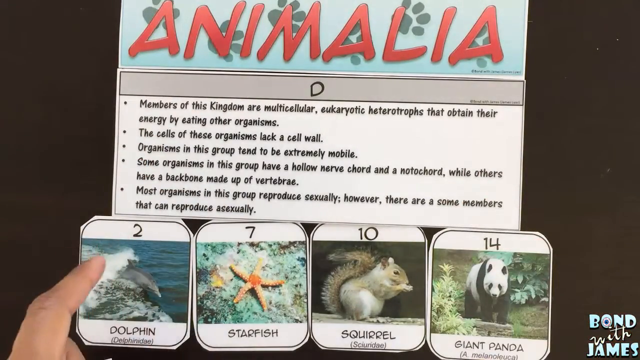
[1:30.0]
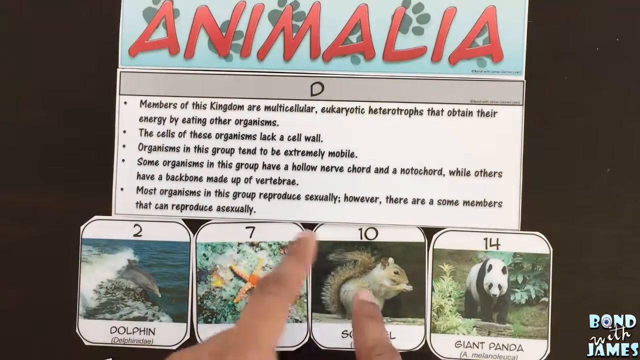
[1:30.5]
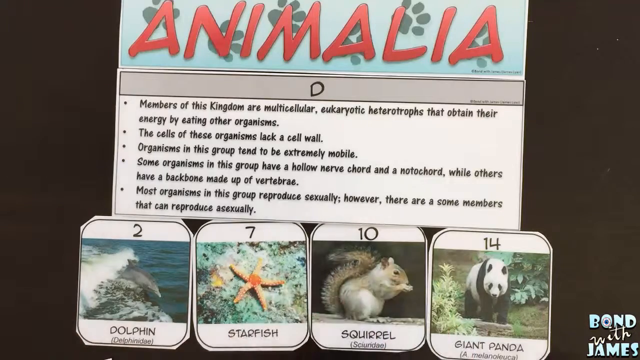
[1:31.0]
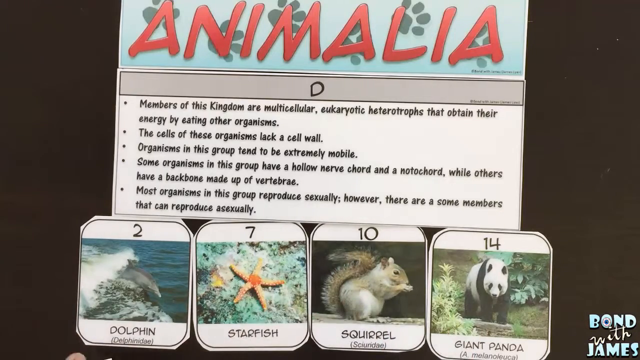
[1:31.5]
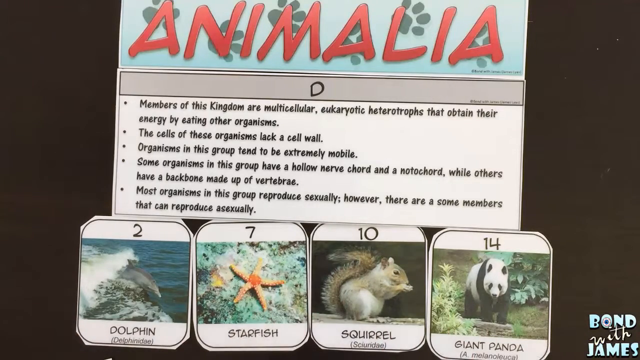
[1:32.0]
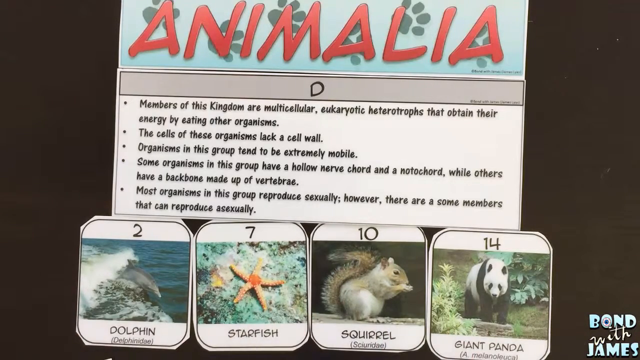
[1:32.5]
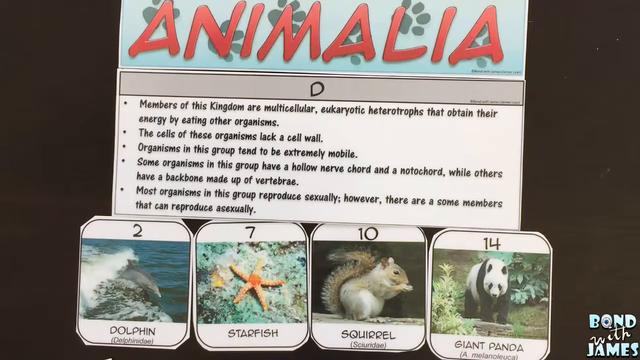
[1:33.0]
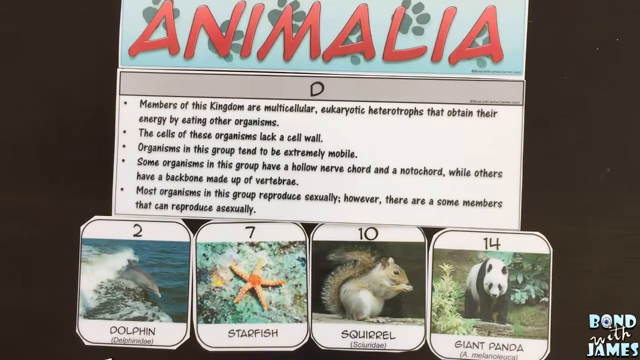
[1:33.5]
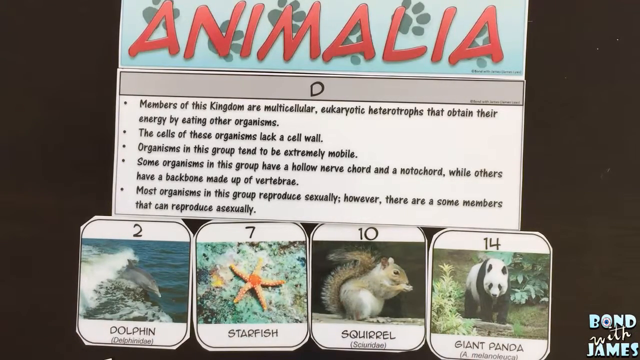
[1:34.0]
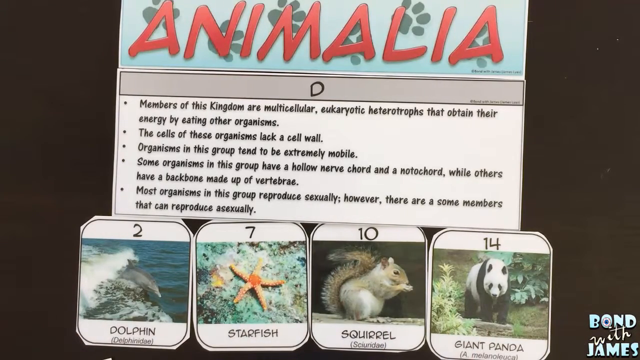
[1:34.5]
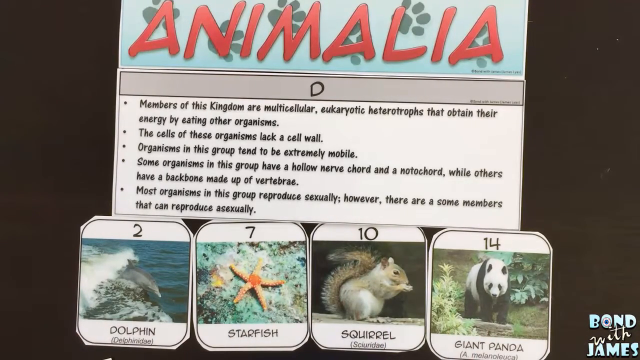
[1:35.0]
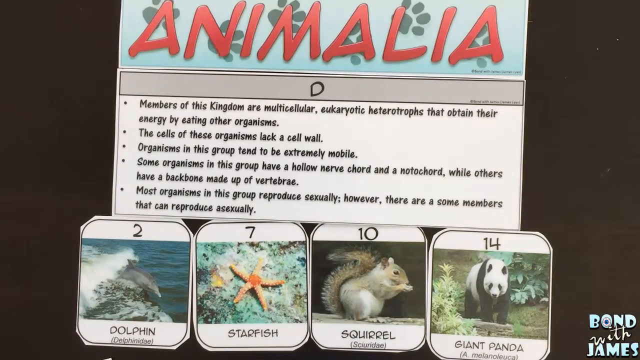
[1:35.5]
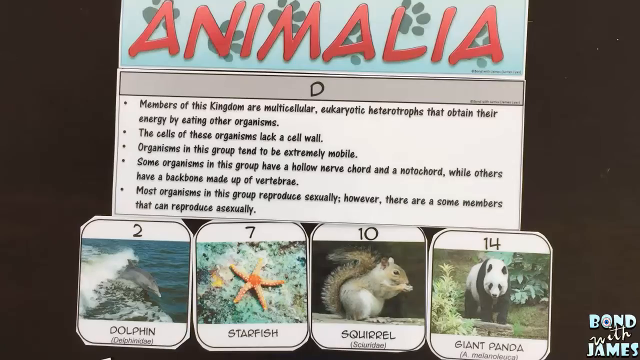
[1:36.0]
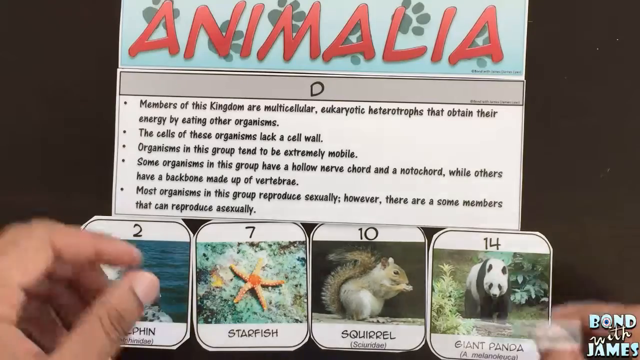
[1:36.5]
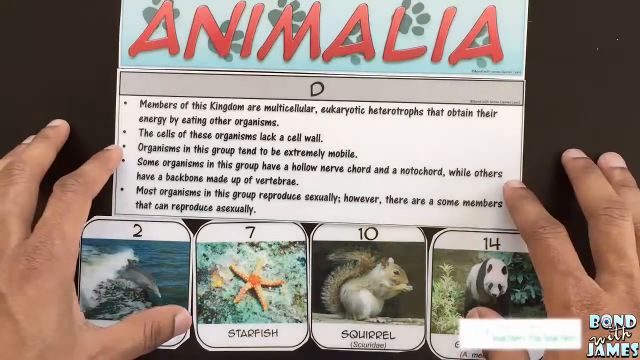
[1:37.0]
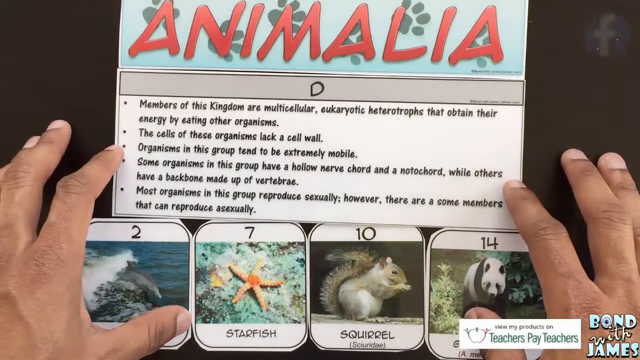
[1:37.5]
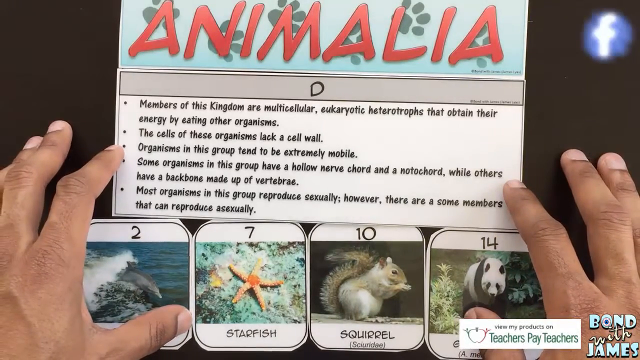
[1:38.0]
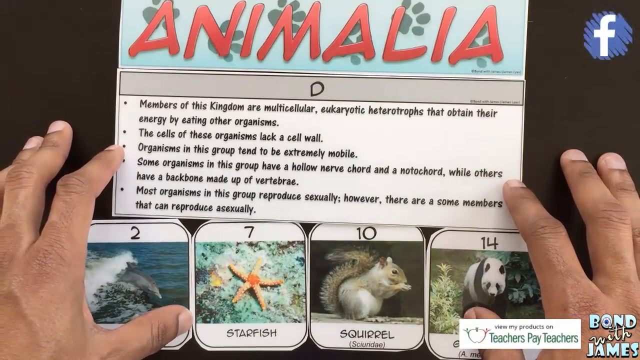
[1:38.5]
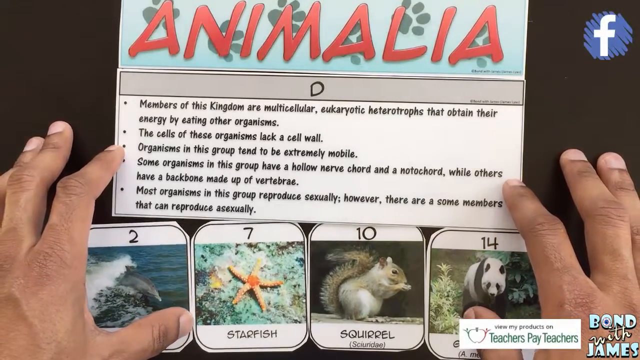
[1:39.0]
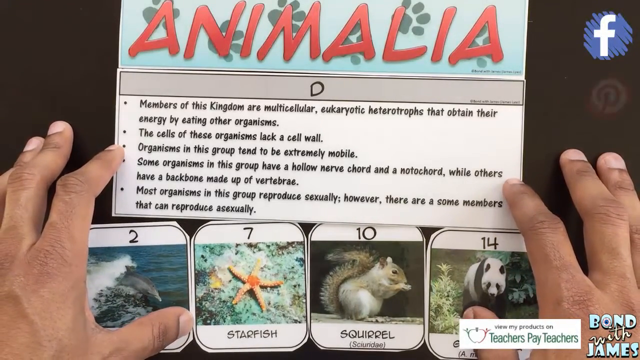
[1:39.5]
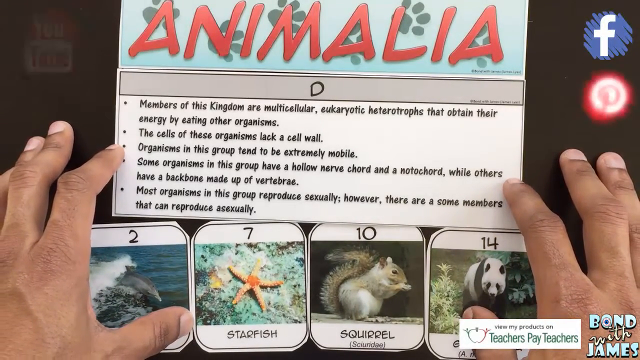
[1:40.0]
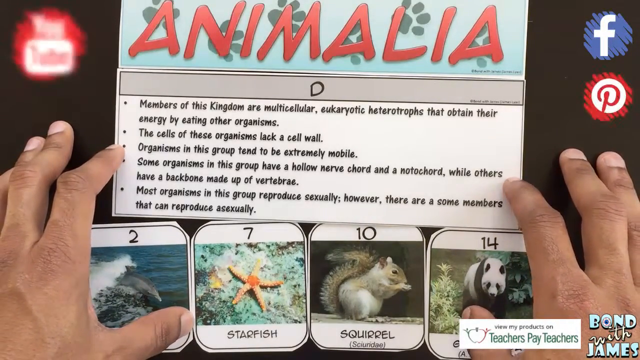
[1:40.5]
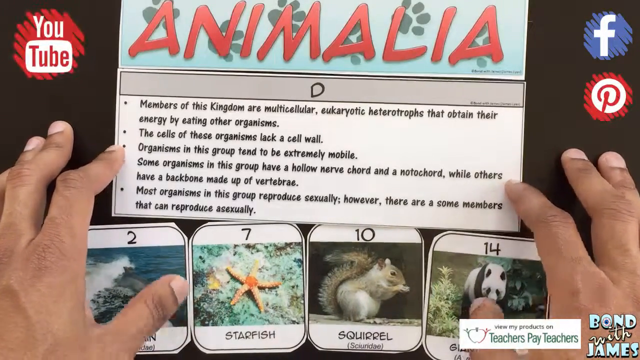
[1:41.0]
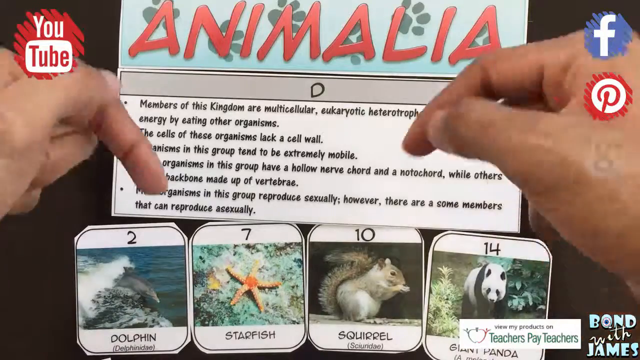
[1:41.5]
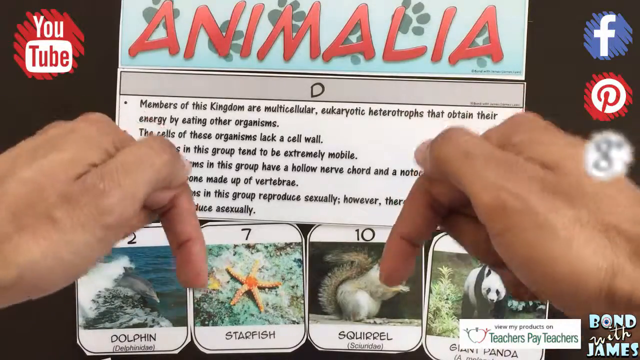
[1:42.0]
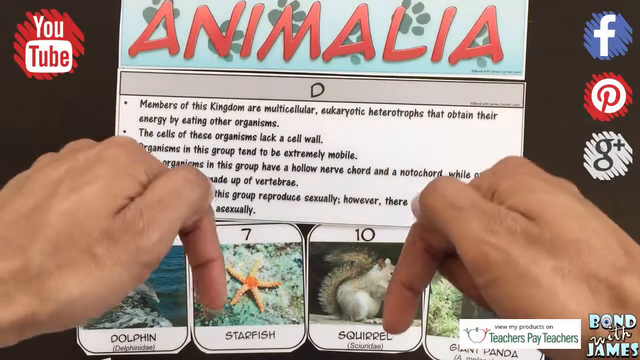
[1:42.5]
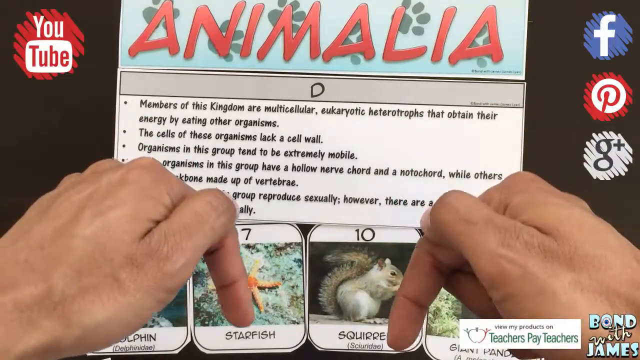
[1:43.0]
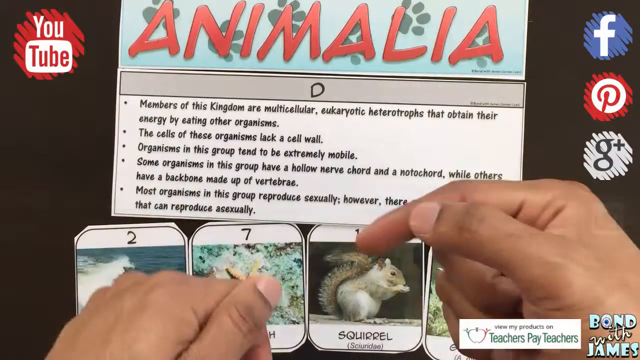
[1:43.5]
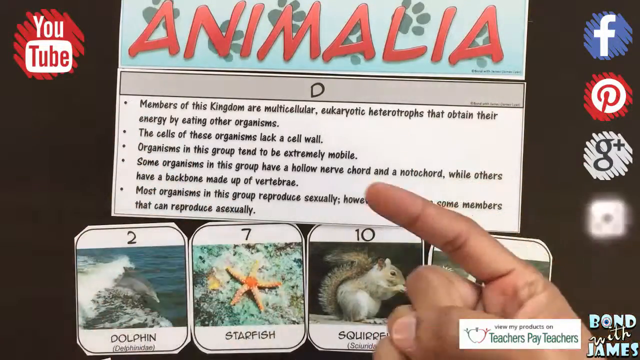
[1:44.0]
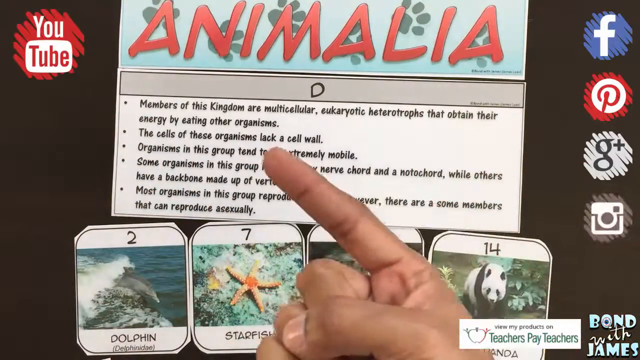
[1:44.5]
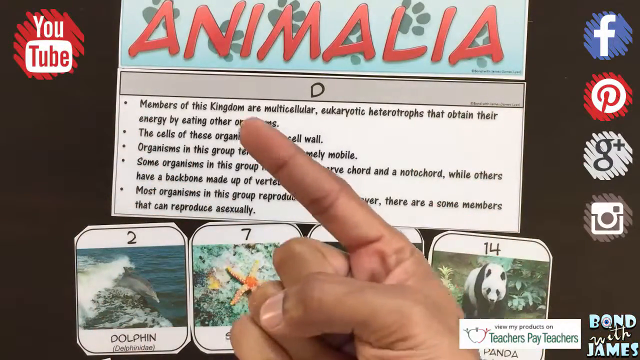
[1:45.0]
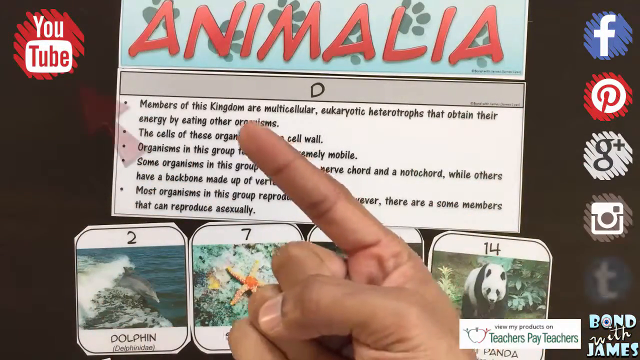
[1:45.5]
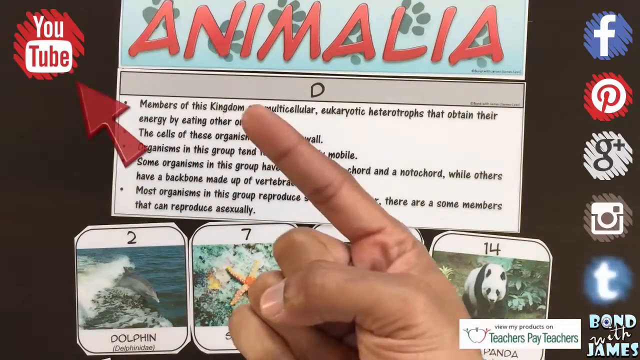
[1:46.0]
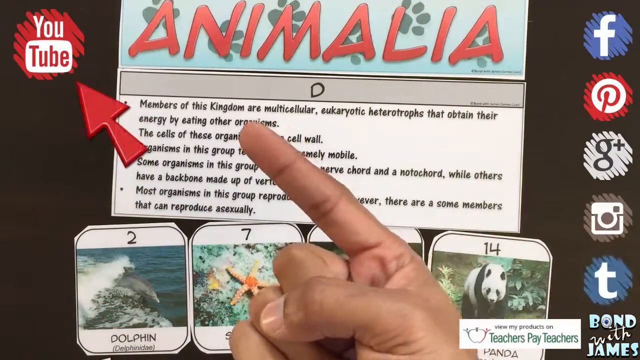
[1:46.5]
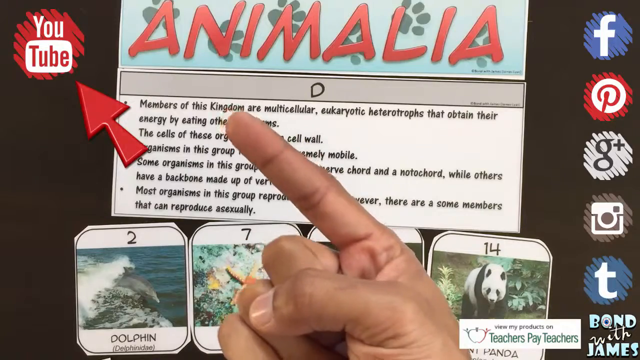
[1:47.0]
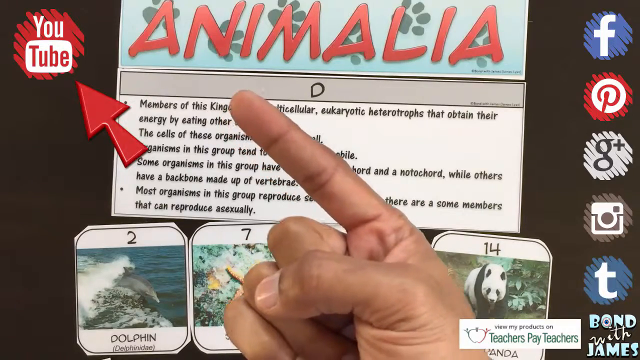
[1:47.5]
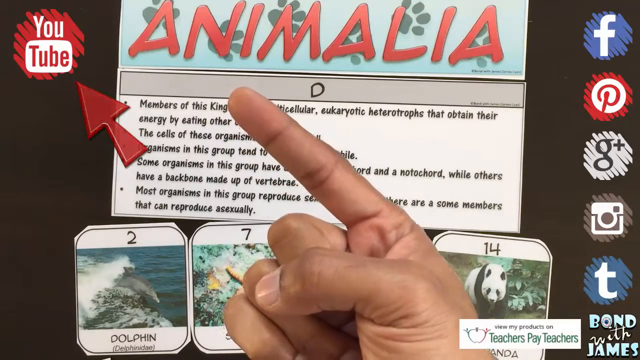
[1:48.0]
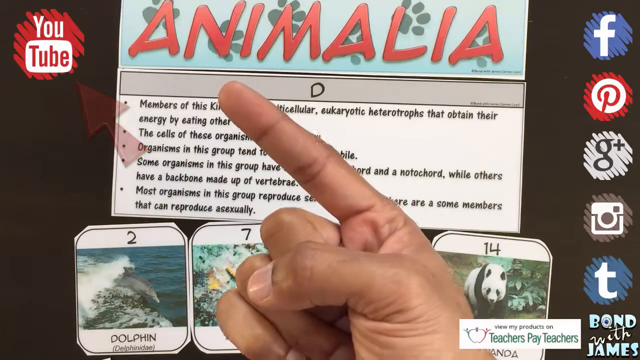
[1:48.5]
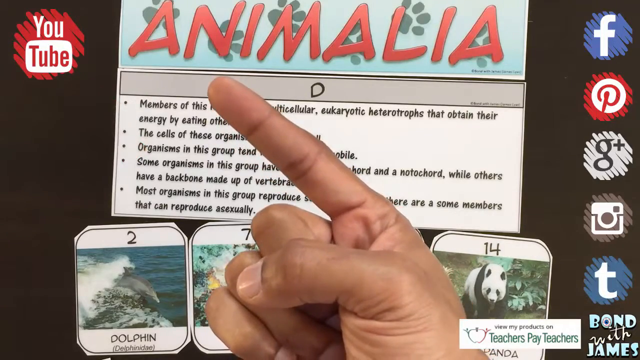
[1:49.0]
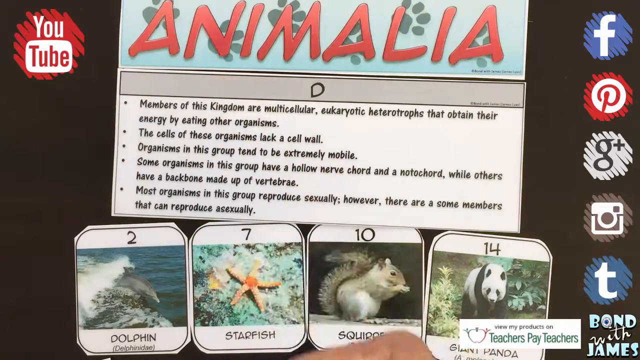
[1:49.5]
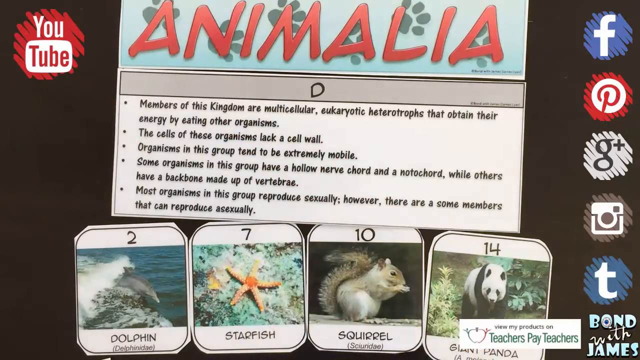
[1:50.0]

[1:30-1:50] The papers are arranged with a colourful paper on top, a black and white paper in the middle and four pictures at the bottom; they look like they are on top of a black table. The colourful paper on top reads "Animalia", written only in capital red letters on a blue background with black footprints that look like a cat's. Under it is a paper labeled D with bullet points written in black on a white background, which read: "members of this kingdom are multicellular eukaryotic", "that obtain their energy by eating other organisms the cells of these organisms lack a cell wall organisms in this group tend to be extremely mobile". Under it are four pictures labeled with numbers on top and names at the bottom: number 2 shows a dolphin in water, number 7 a starfish, number 10 a squirrel and number 14 a panda.